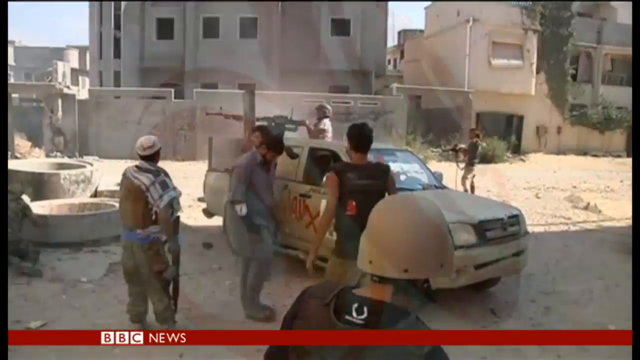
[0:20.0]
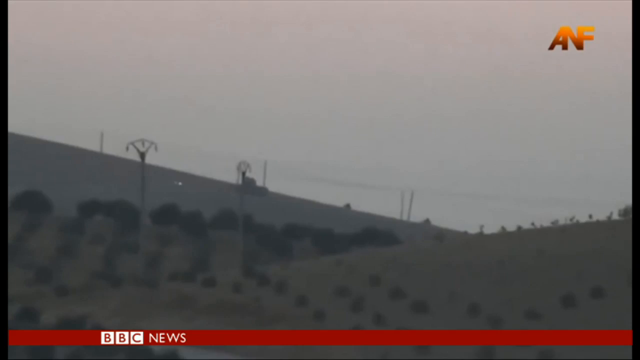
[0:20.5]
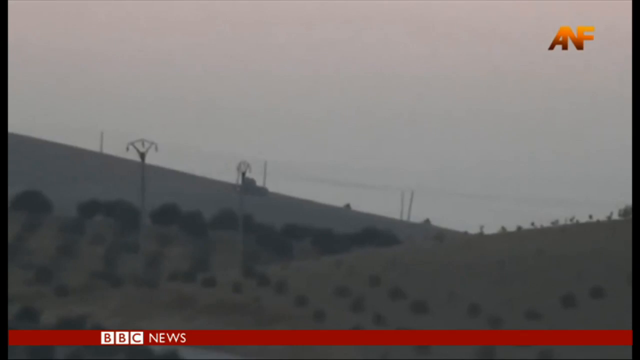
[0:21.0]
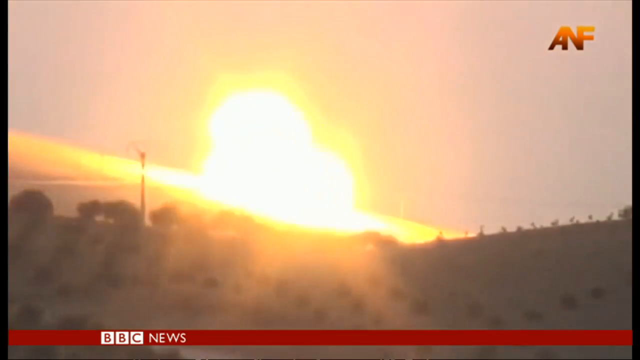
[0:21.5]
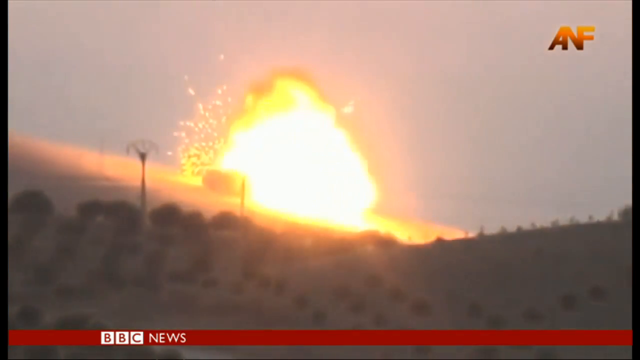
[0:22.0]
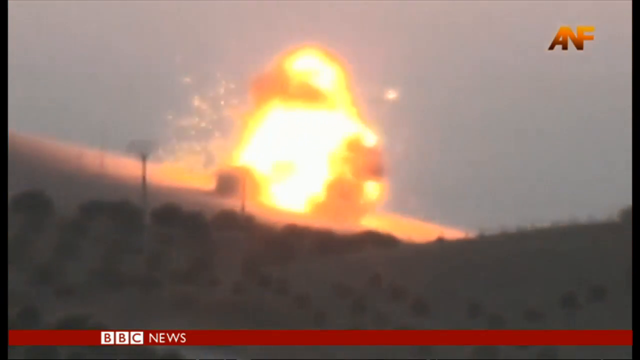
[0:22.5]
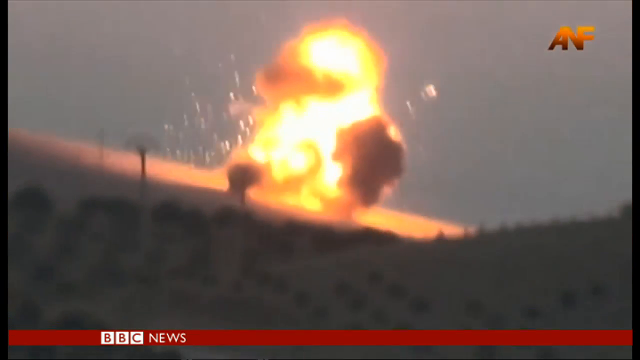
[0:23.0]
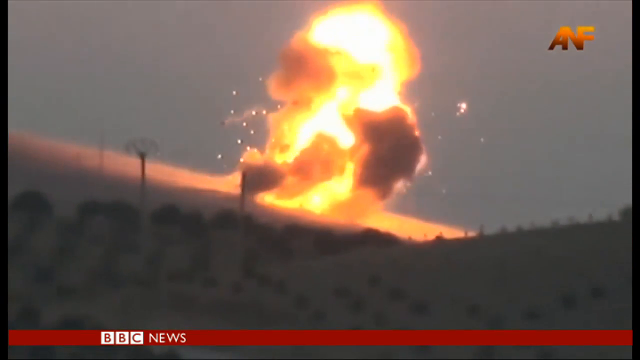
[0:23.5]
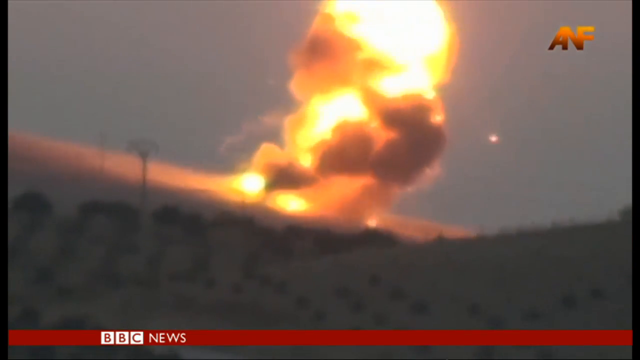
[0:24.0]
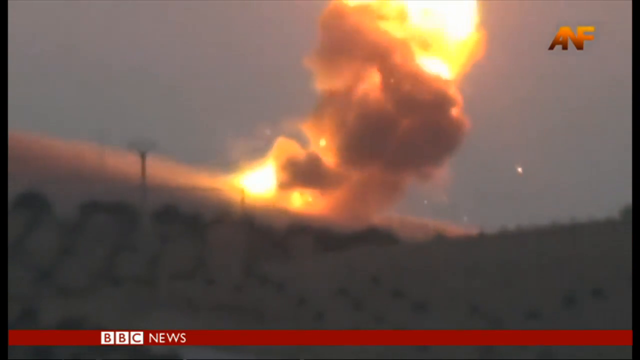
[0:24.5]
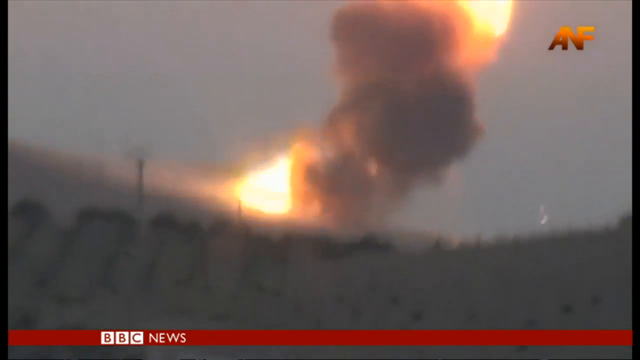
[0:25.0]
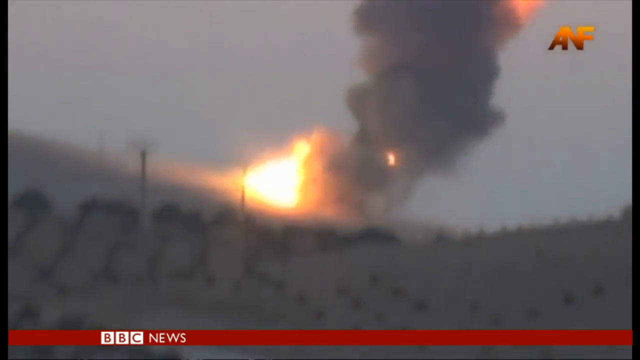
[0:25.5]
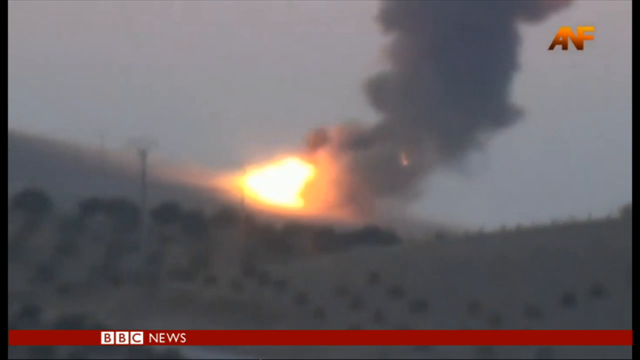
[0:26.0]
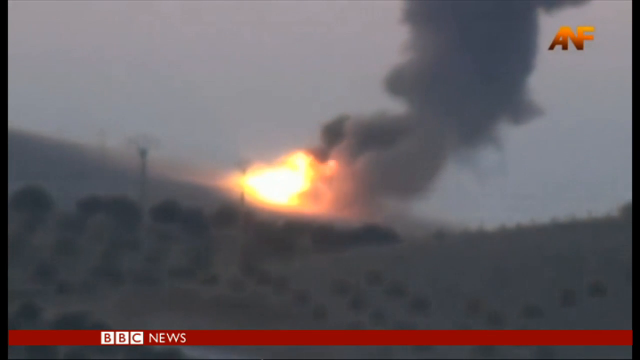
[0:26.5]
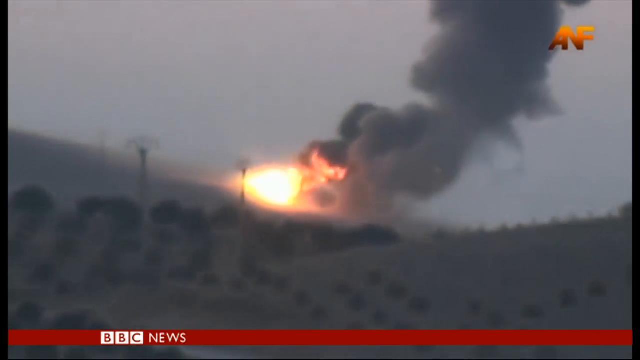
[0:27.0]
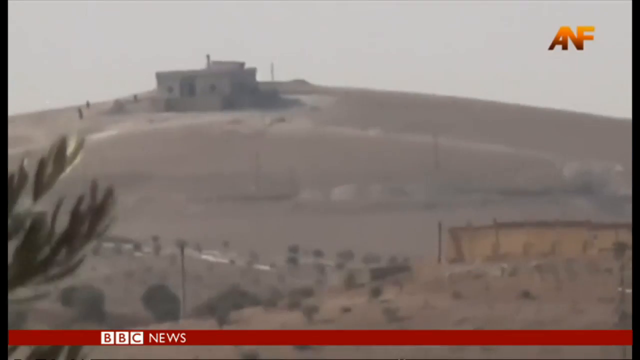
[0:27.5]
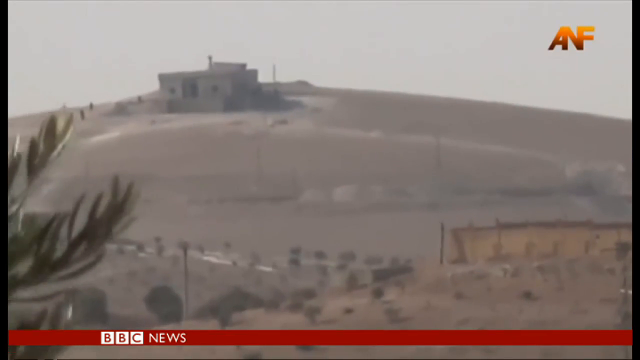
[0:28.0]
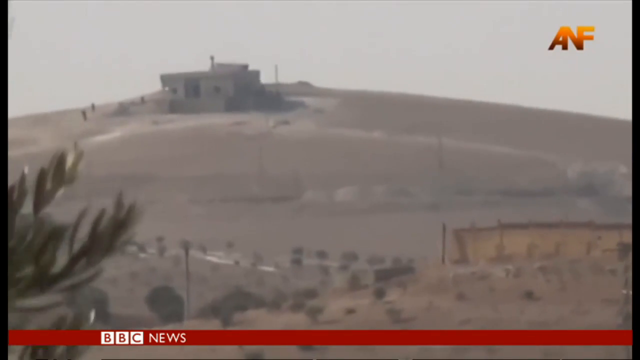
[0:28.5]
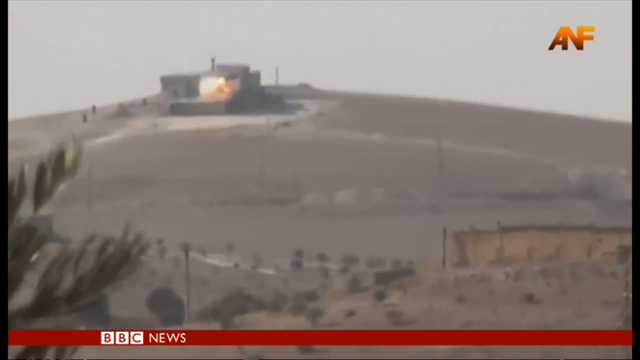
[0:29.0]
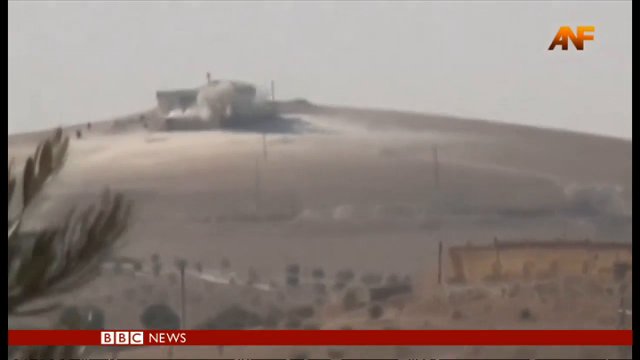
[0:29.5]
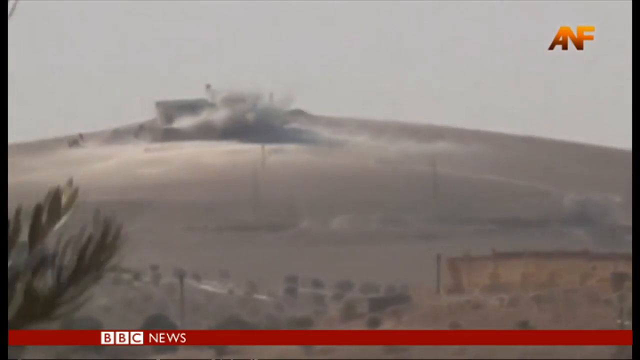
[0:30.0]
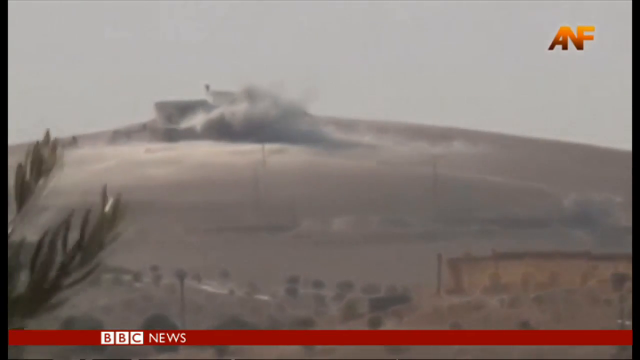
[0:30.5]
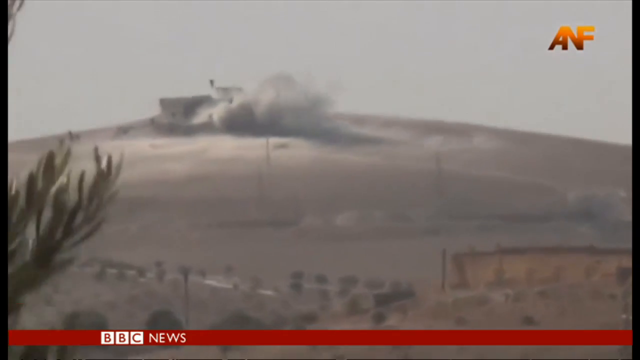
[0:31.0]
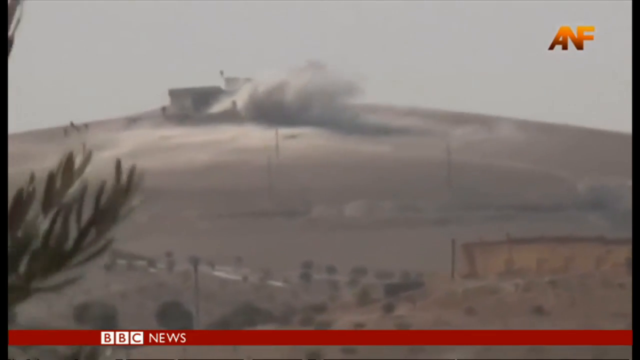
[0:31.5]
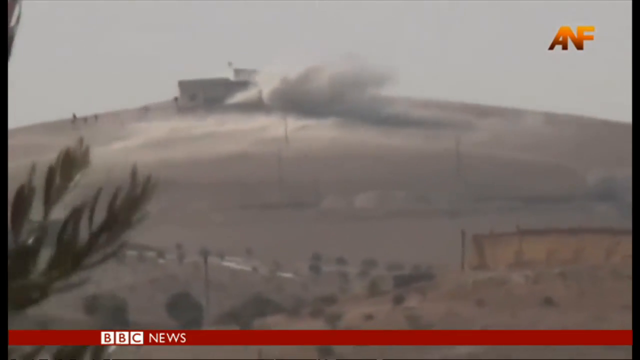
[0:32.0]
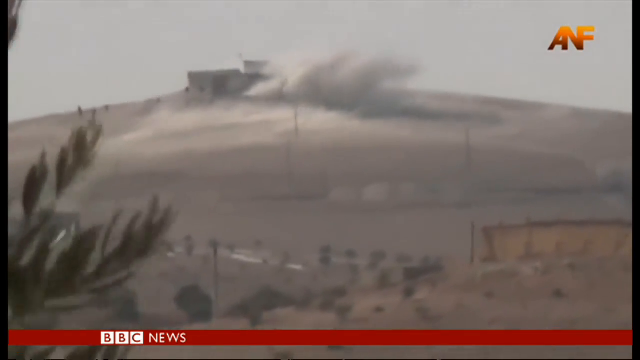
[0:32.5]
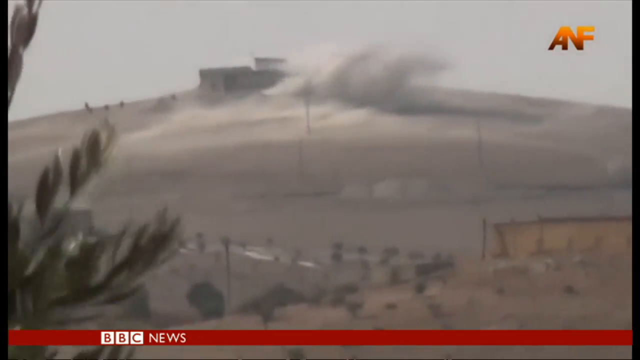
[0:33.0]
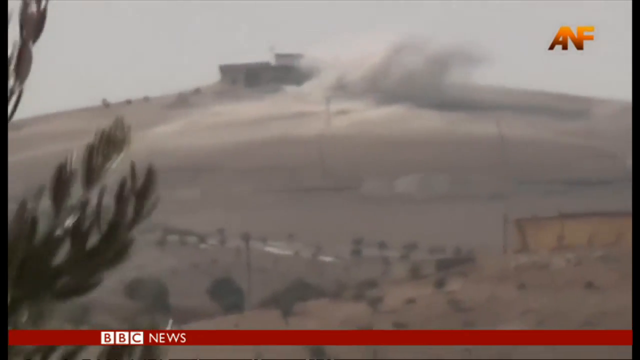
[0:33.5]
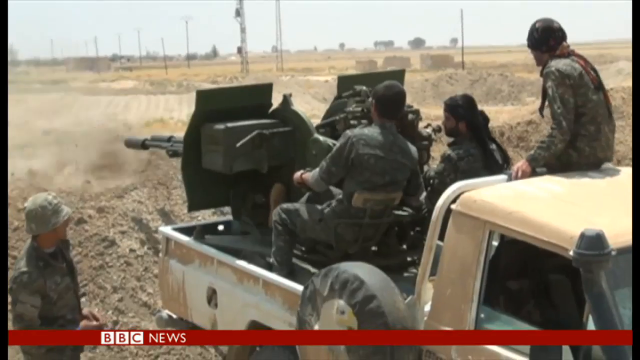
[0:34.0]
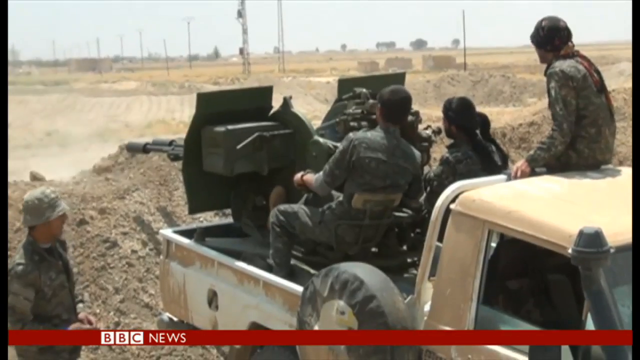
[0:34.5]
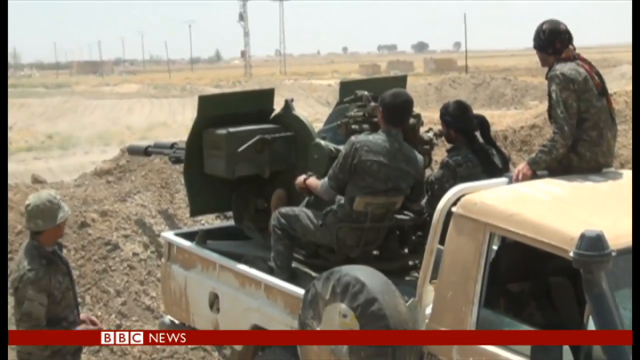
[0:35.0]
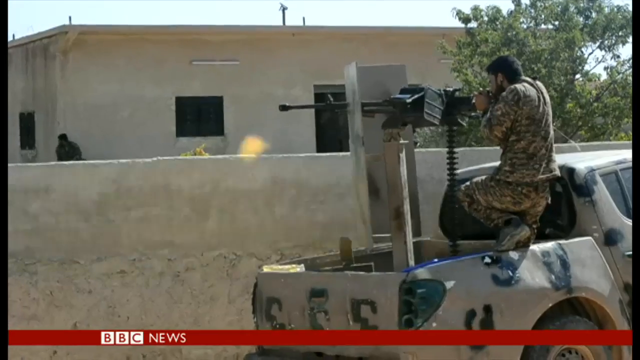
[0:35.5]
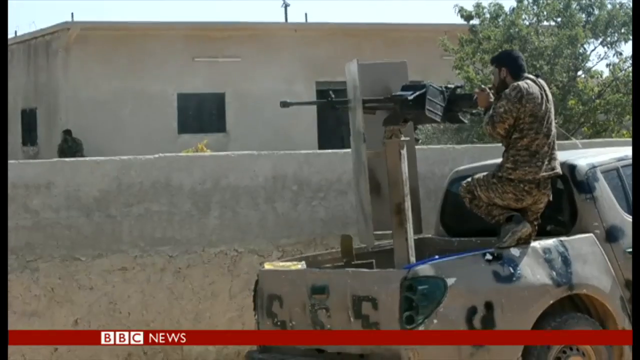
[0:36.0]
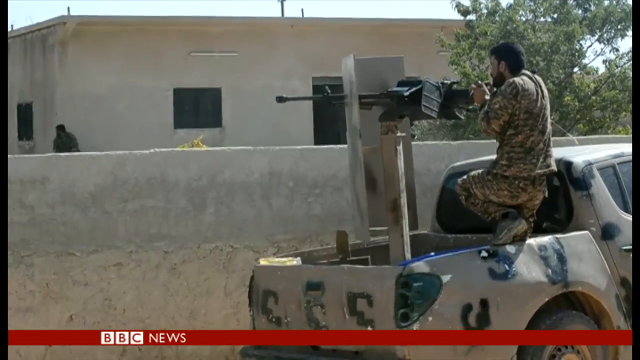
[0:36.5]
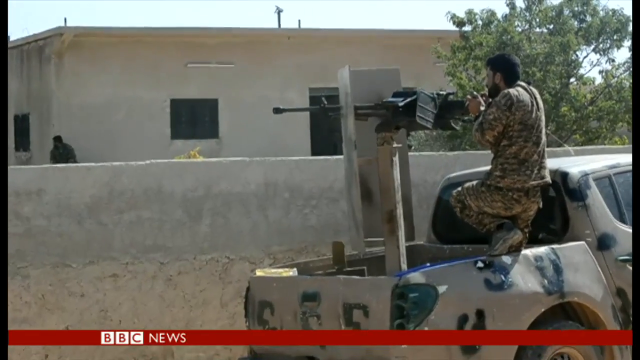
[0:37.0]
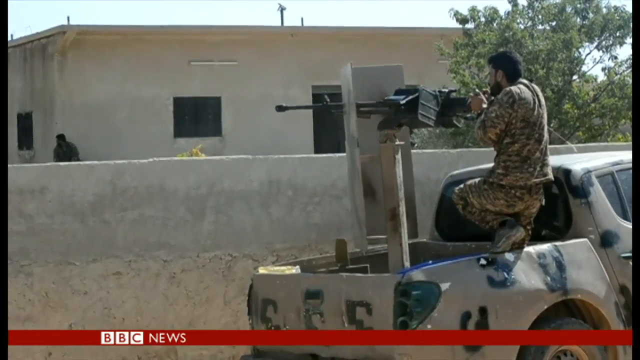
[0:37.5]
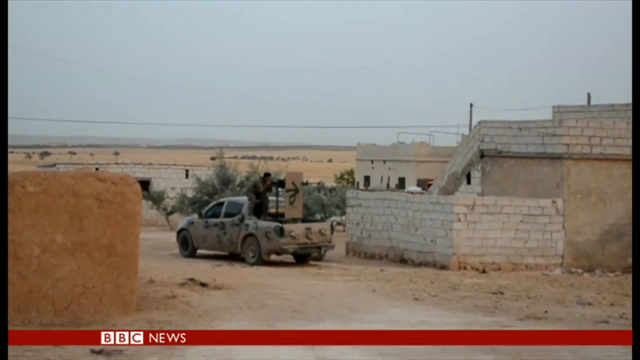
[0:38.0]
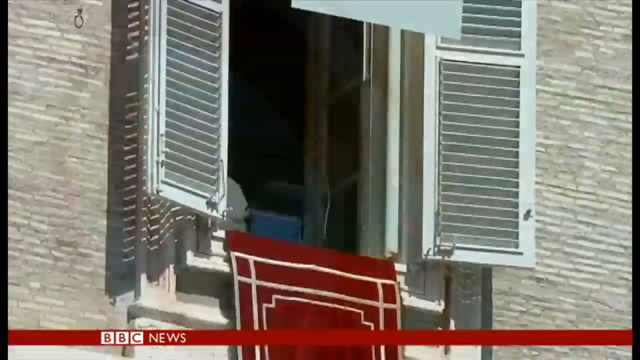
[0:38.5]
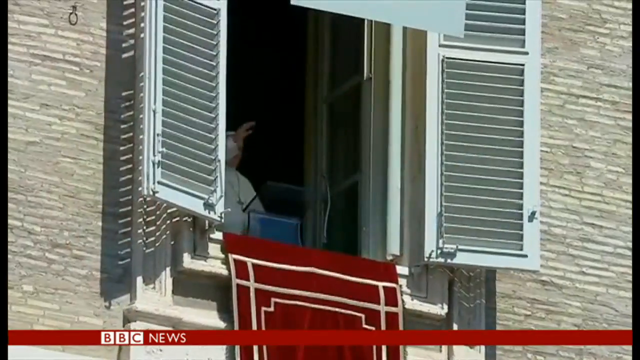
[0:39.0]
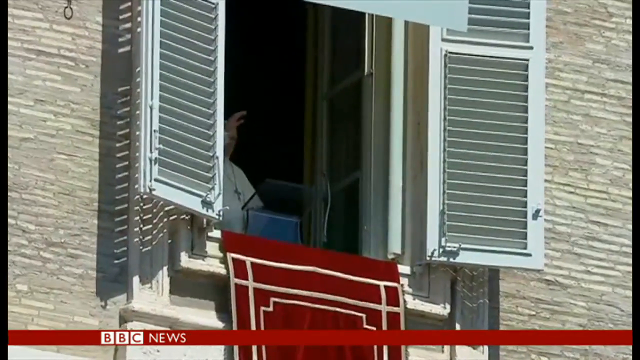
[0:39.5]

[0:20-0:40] Another man, far off in the distance on the right side, holds a gun in his hand but is not shooting yet. Another man walks between them, a man has a gun resting vertically, and a man looks down as he walks with his hands in his pockets. Then an explosion appears in the distance on a hillside: a sudden massive explosion followed by an oval-shaped fire circulating all around itself. The setting is a desert with a few shrubs, and it looks almost like dusk, or maybe haze. A thick cloud of smoke billows up to the right. Next, someone appears to be shooting a rocket off into the distance, toward a hill with some kind of building in the distance, and smoke comes up from it. Then someone operates the turret on the back of the truck; there appear to be two different people side by side, and the man on the left leans in. Another man aims off to the front left, with his left boot up on the side of the truck bed, using his hands to turn the turret.